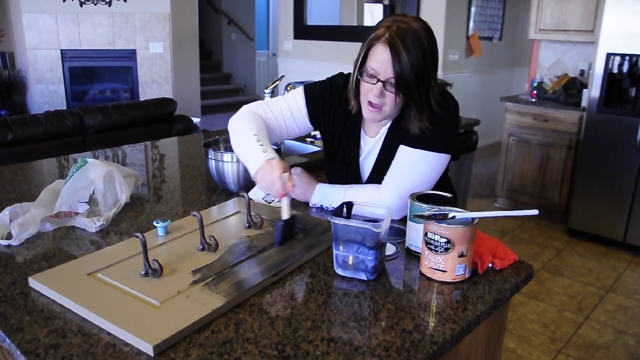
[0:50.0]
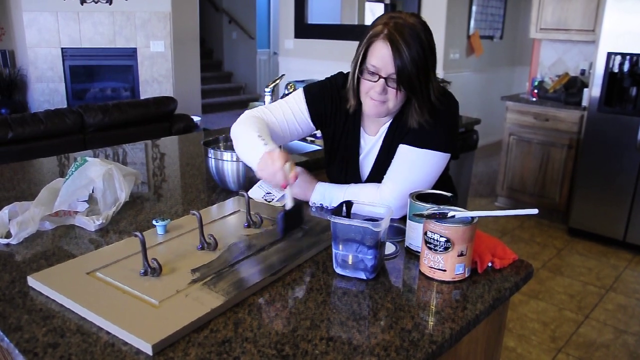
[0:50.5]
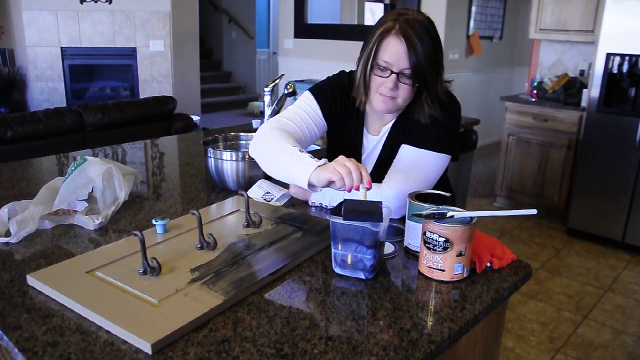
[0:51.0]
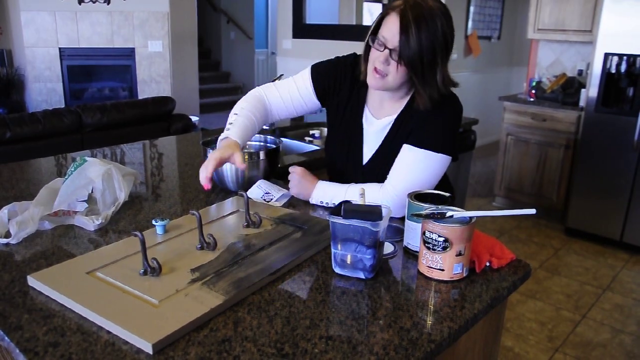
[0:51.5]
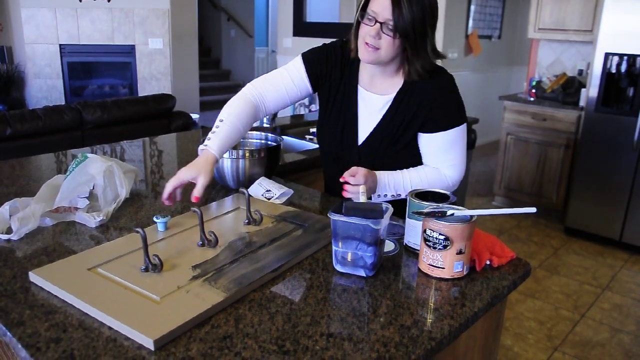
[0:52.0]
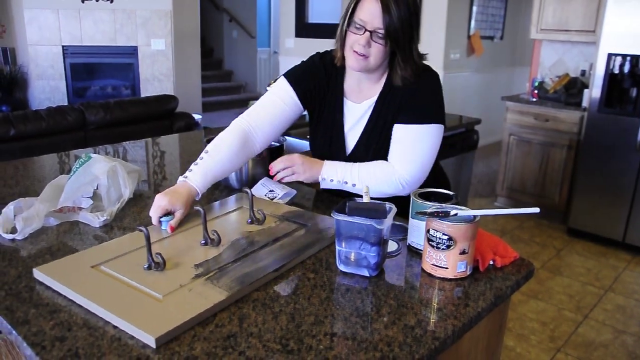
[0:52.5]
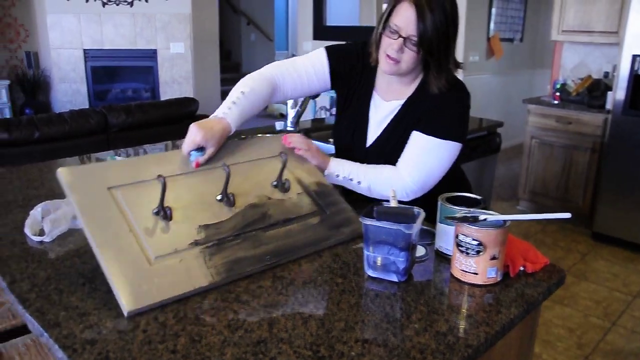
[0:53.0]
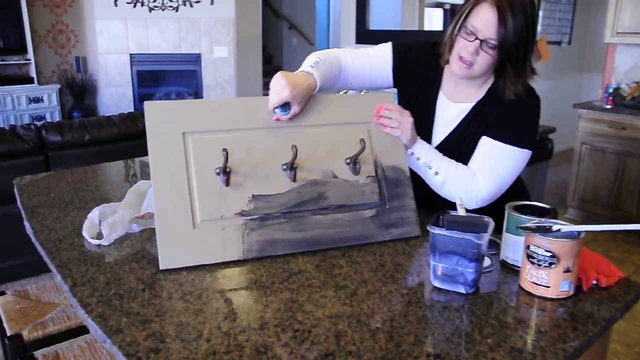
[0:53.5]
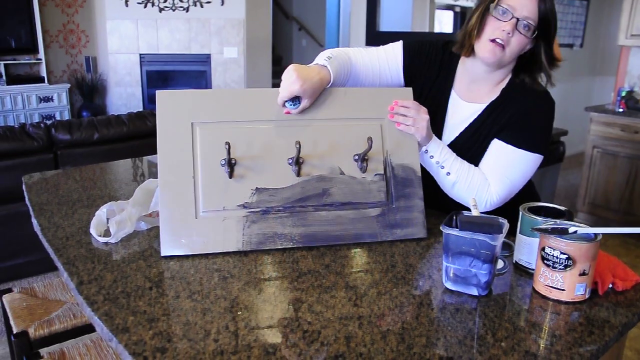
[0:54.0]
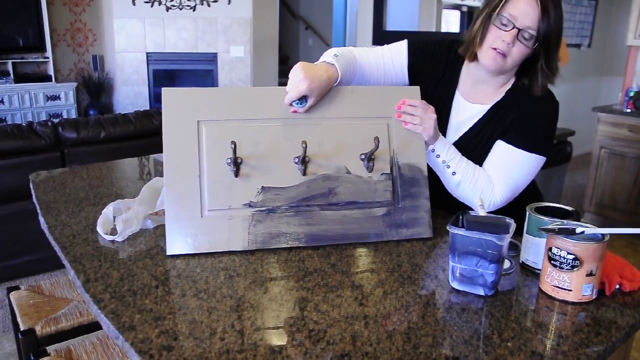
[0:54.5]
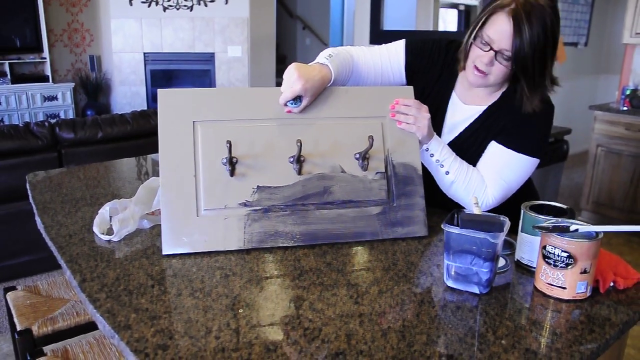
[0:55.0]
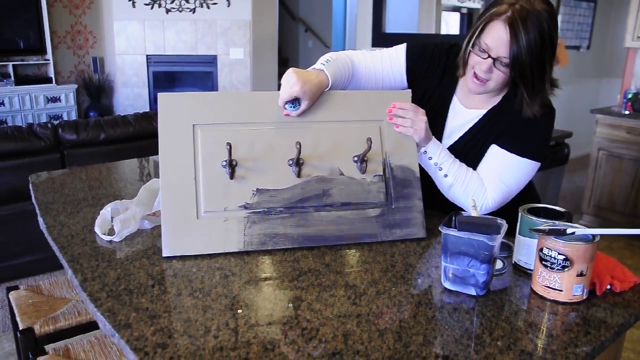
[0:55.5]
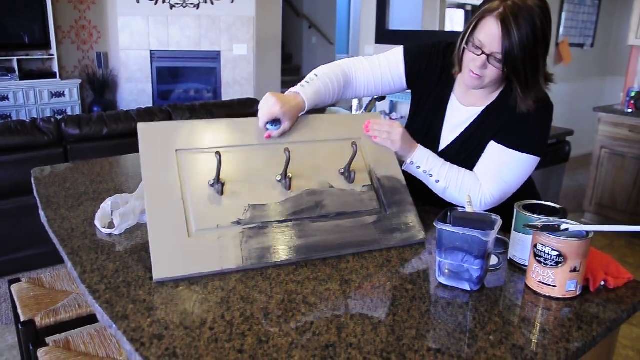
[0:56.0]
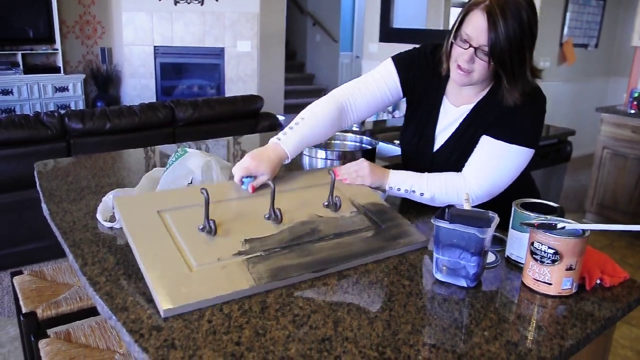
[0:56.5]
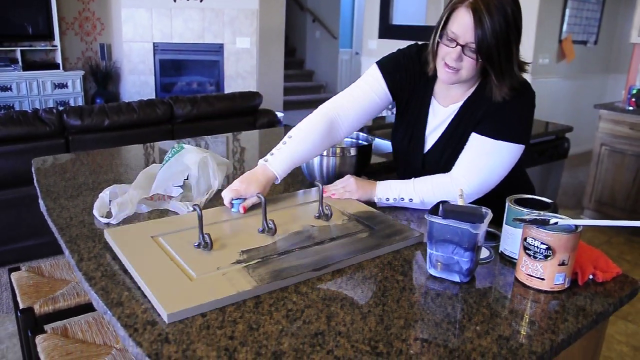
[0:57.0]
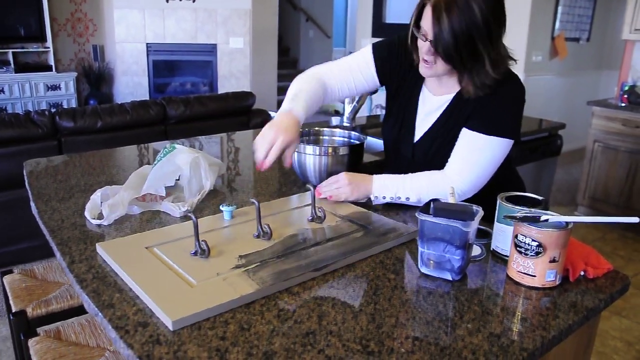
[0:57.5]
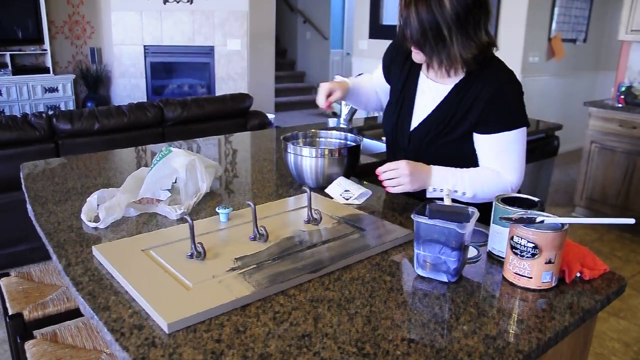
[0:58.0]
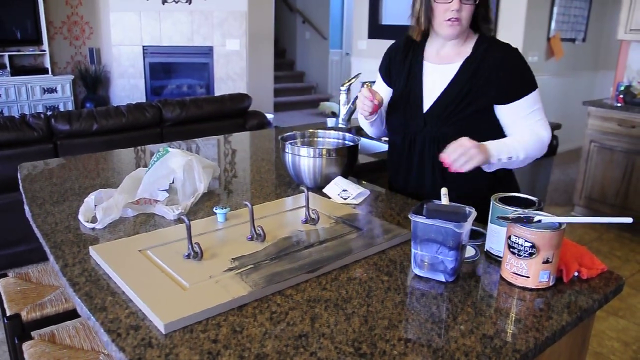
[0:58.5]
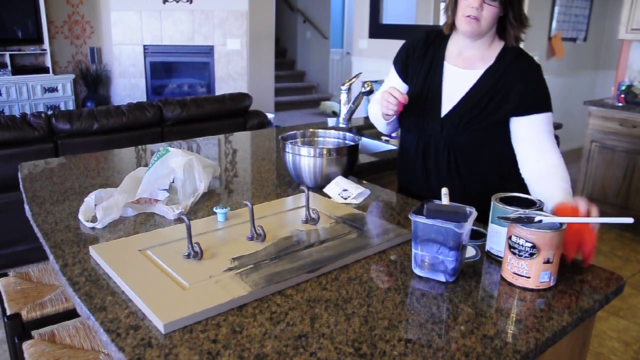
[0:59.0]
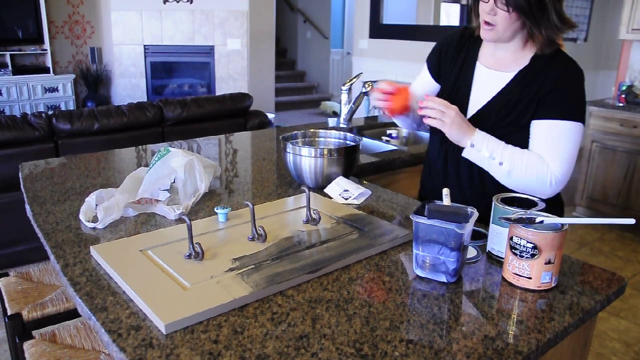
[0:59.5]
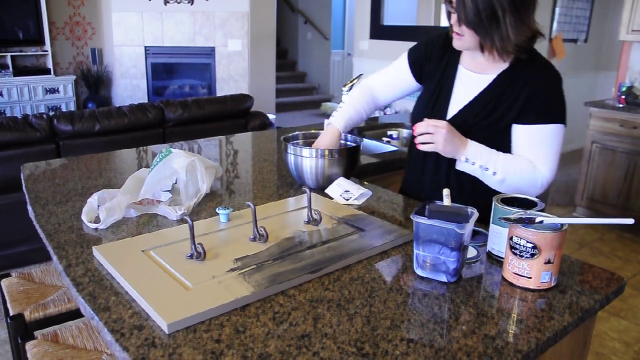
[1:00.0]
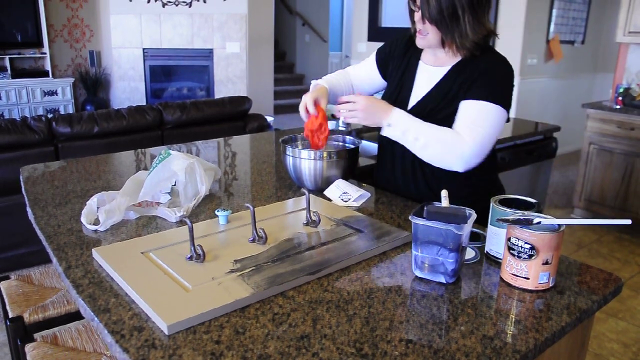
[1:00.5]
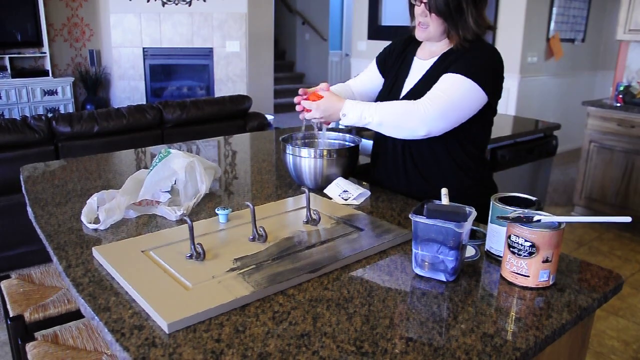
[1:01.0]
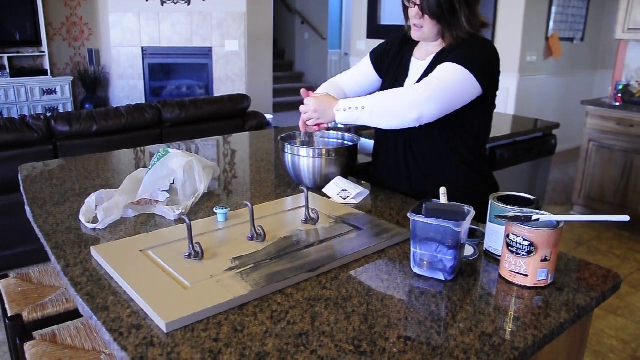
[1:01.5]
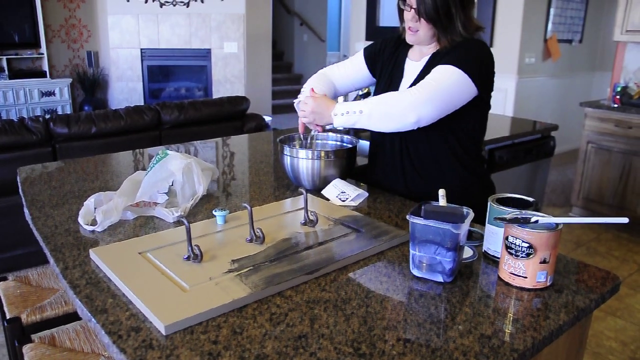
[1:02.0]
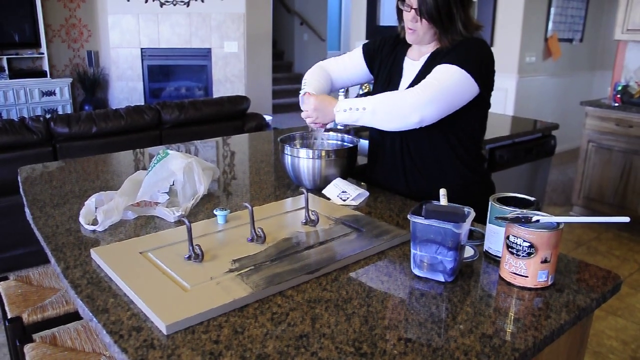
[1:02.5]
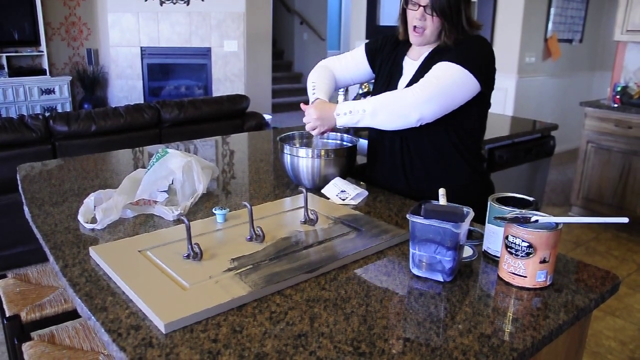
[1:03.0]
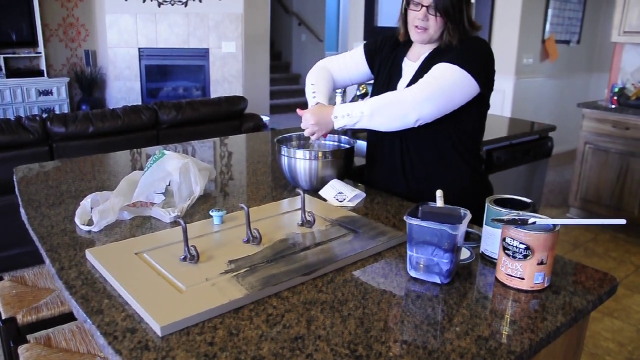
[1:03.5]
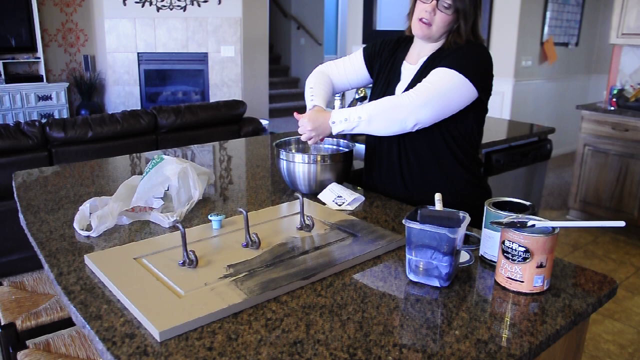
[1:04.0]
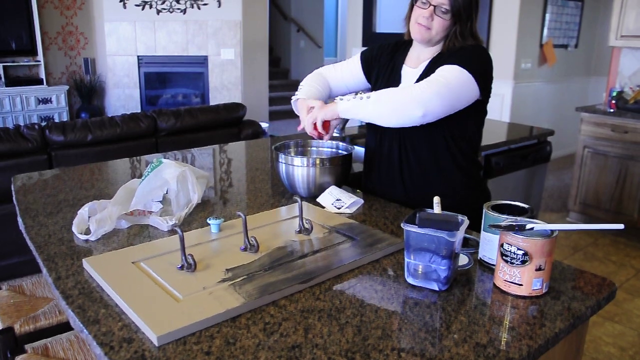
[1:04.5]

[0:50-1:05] In the YouTube video titled How to Glaze Furniture, a woman in a white shirt and black vest has been applying a dark blue or black paint, possibly oil-based, to the upper right corner of the piece of wood from the viewer's point of view. The wood has three hooks and a knob. After painting some of it, she dips a red cloth into a silver bowl with liquid in it and wrings it out. She holds the board up by the knob at the top to show how much she has put on, then grabs the red cloth and puts it in the silver bowl, ending by wringing the cloth out. When she holds up the board, both of her hands are visible, showing pink nail polish. A tile floor is visible in the background of the kitchen, and at center left there appears to be a living area.